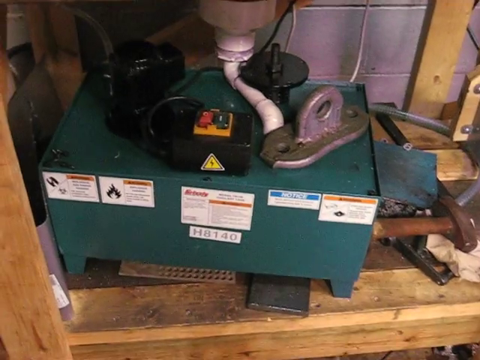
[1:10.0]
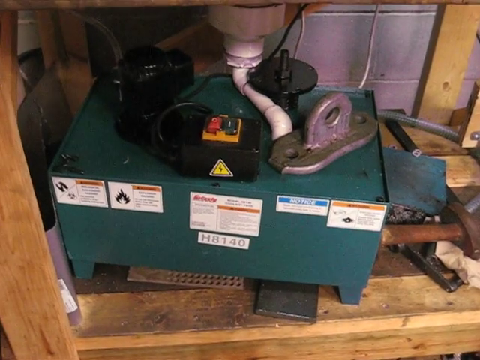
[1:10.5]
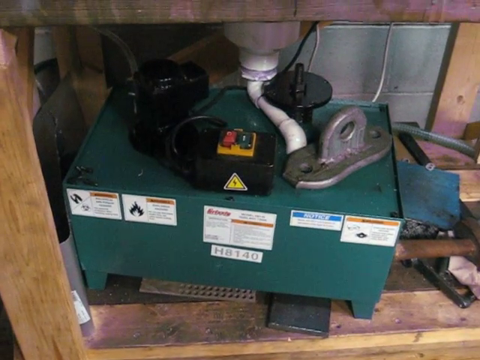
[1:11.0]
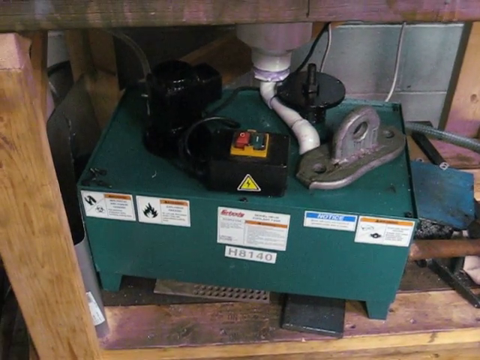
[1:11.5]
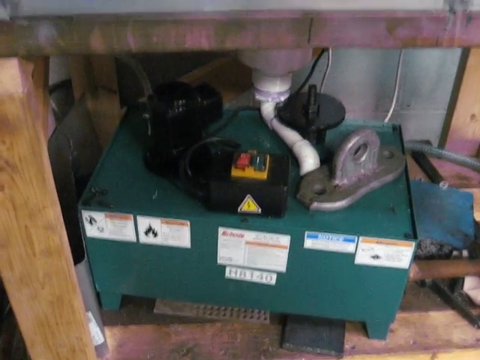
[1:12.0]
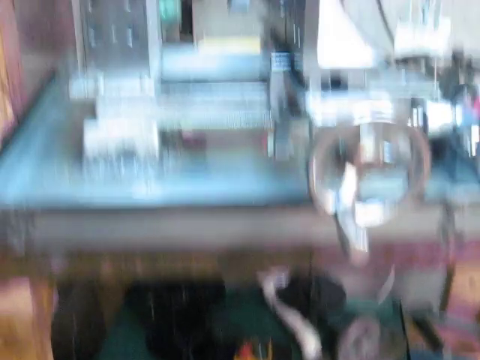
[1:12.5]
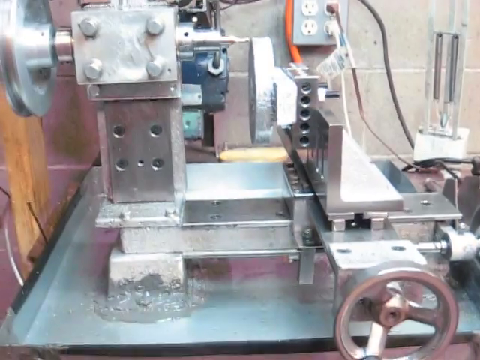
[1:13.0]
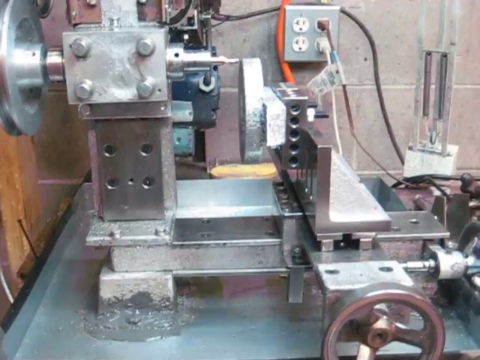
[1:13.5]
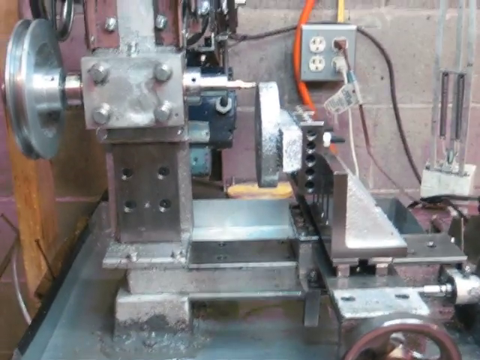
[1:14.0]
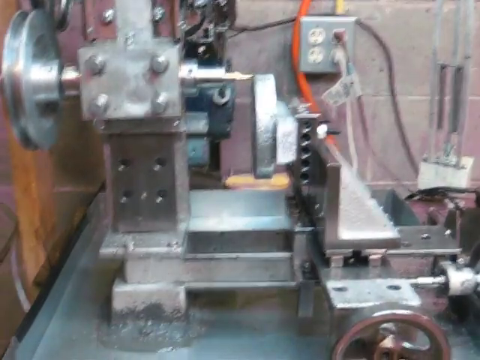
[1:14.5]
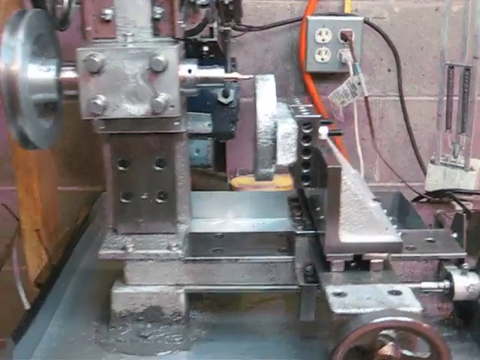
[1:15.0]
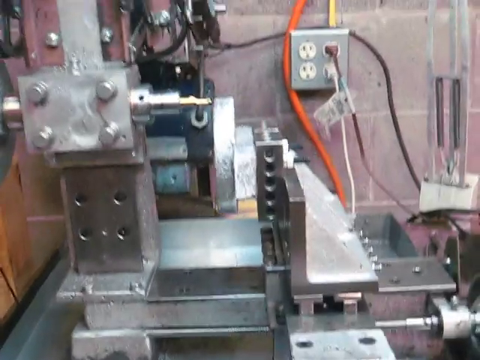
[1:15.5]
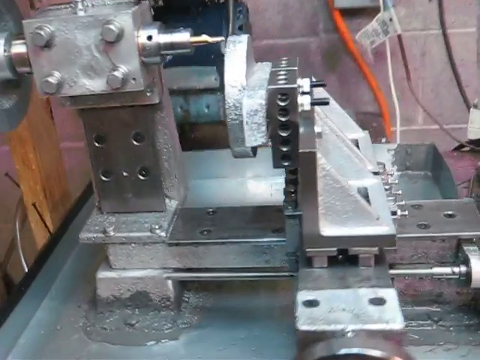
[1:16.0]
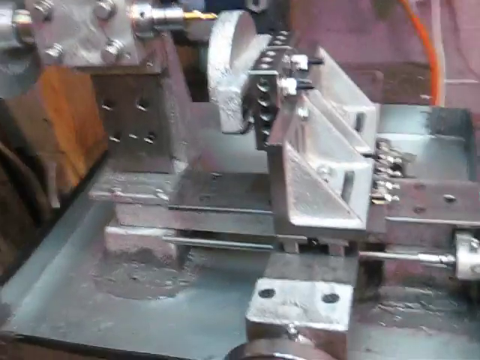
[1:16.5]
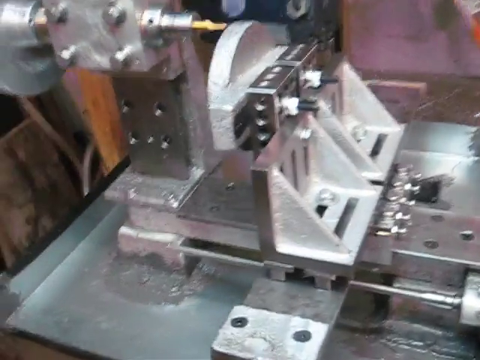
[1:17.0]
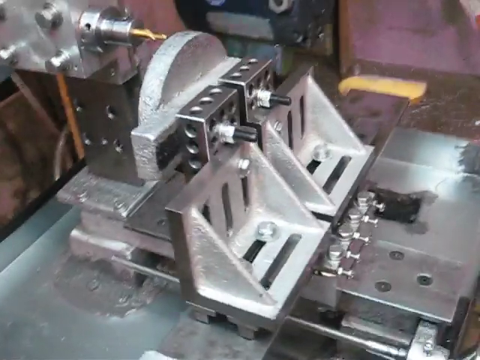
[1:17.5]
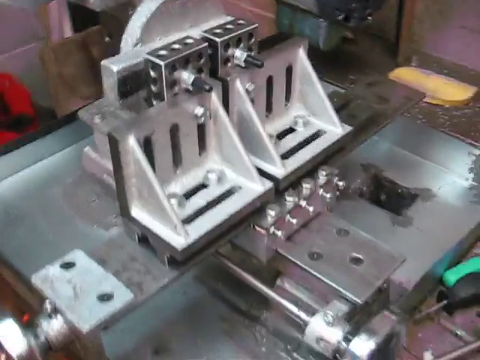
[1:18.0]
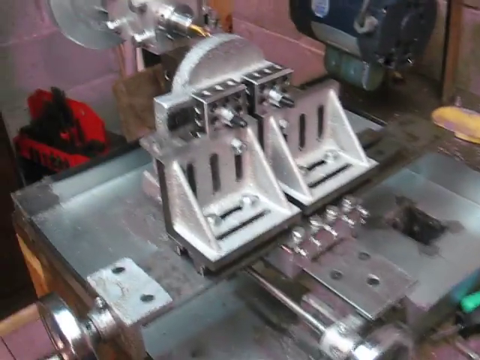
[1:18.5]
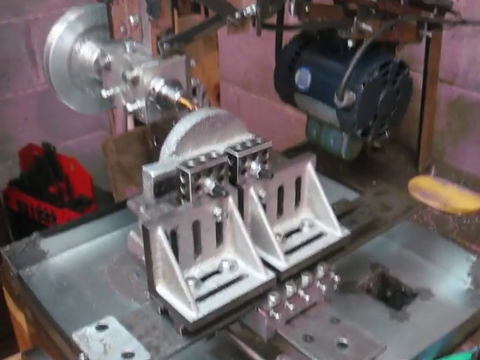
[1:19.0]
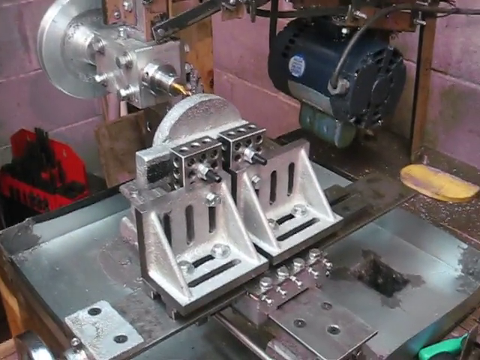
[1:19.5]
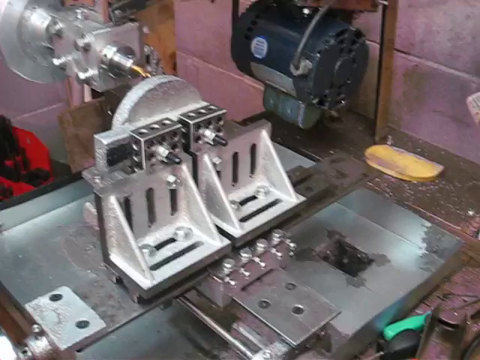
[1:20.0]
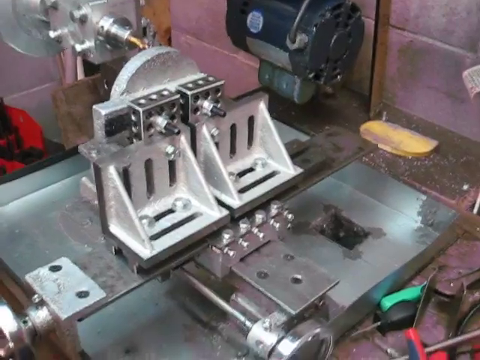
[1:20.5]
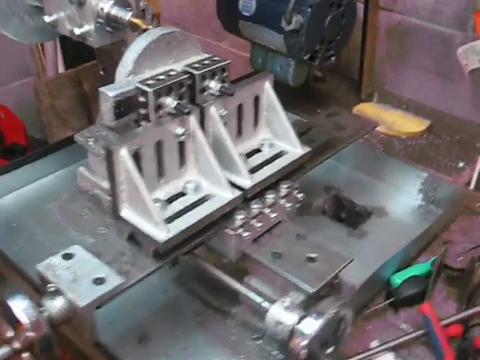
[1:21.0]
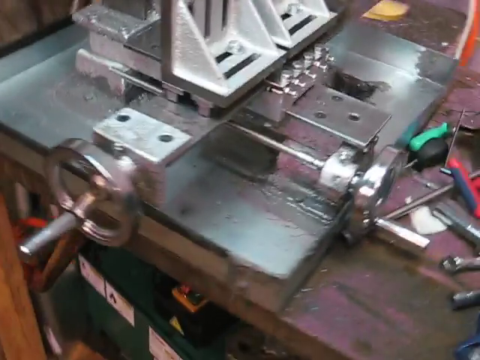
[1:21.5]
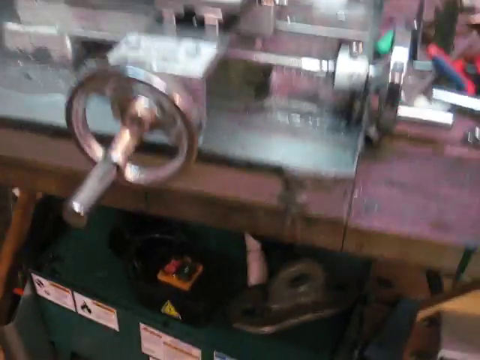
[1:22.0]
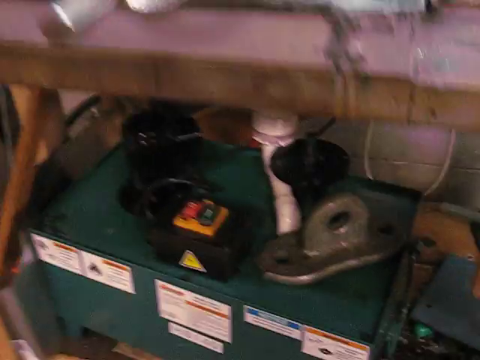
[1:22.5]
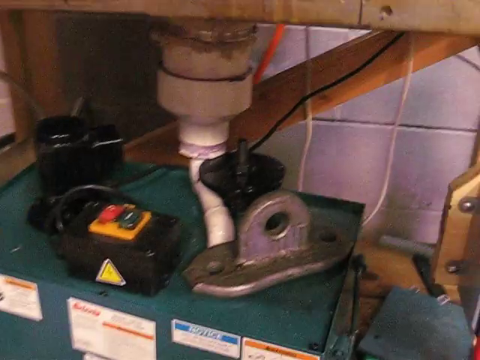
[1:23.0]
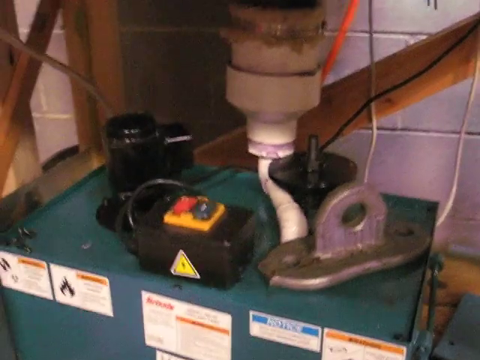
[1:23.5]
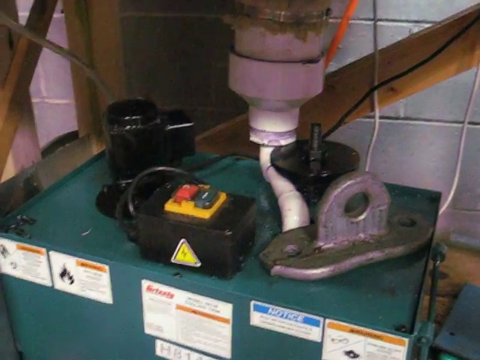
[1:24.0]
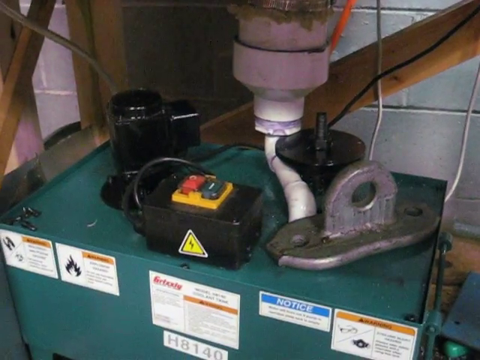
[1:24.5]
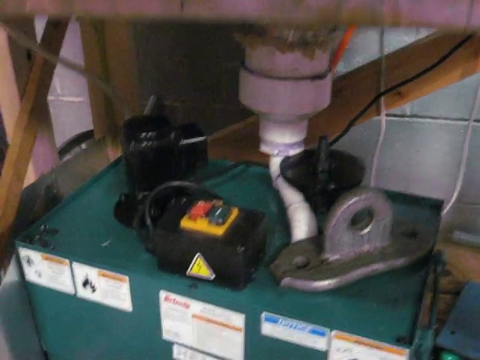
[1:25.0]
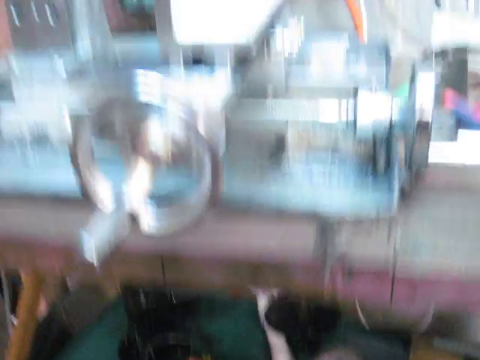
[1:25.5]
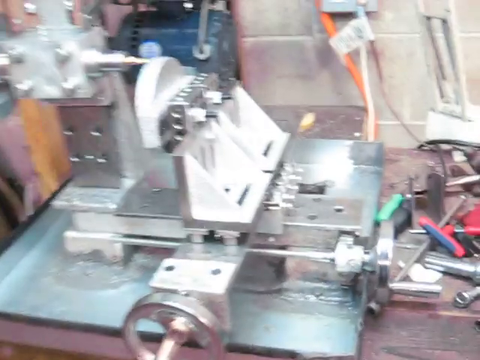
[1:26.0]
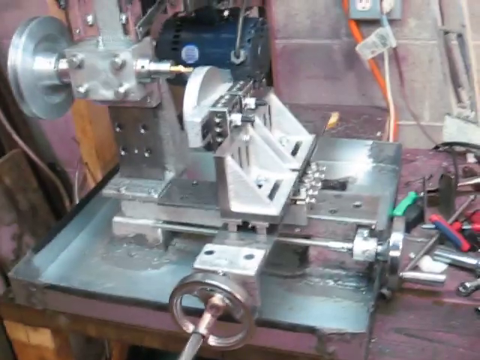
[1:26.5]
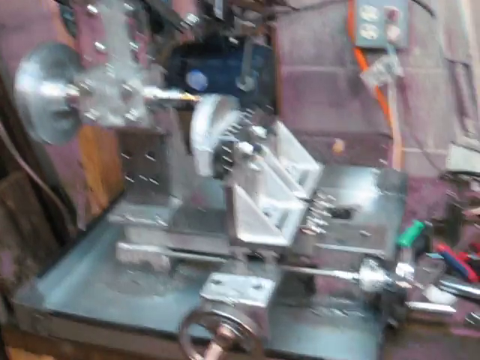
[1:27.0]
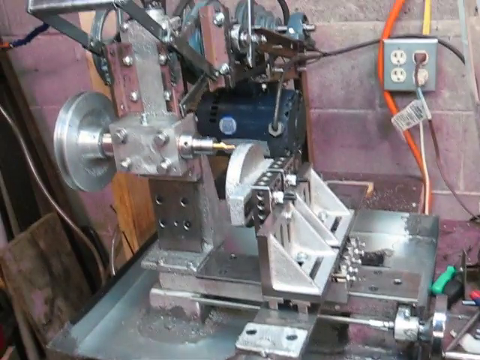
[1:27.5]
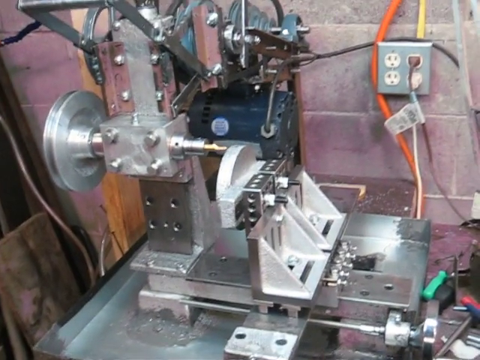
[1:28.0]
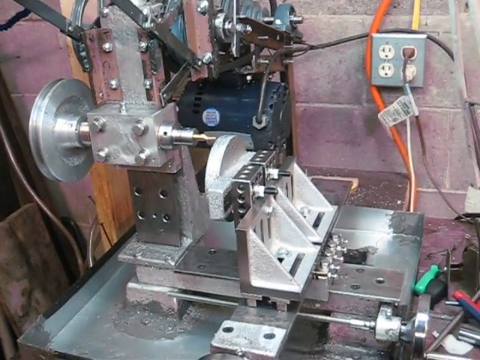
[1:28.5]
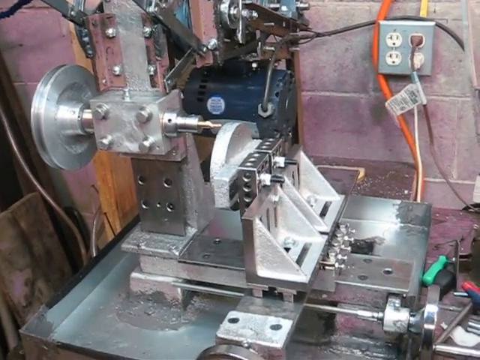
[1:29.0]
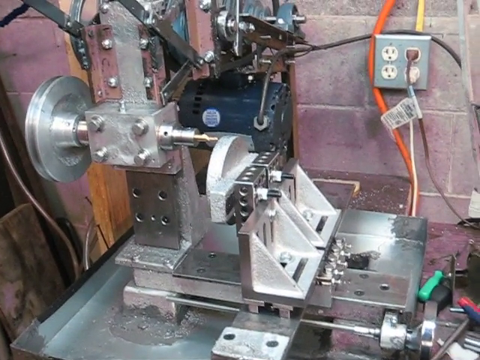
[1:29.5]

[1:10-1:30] A machine has a green surface, almost like a green box, covered in stickers. On top of it are black compartments attached to the green box, along with a silver compartment. A white tube sticks out and goes up, and it kind of resembles a sink. The camera pans up to a giant, very thick drill with many compartments, thick metal and really thick bolts. The actual drill looks gold, and a clamp is right next to it.